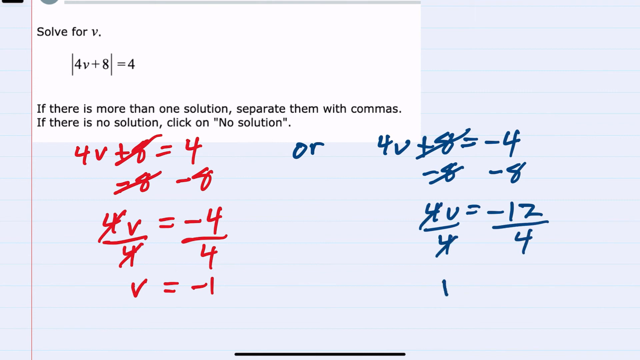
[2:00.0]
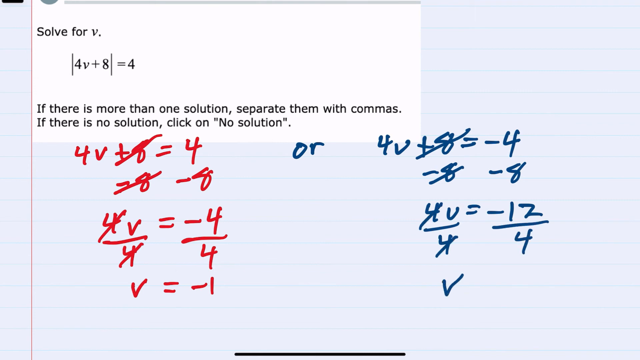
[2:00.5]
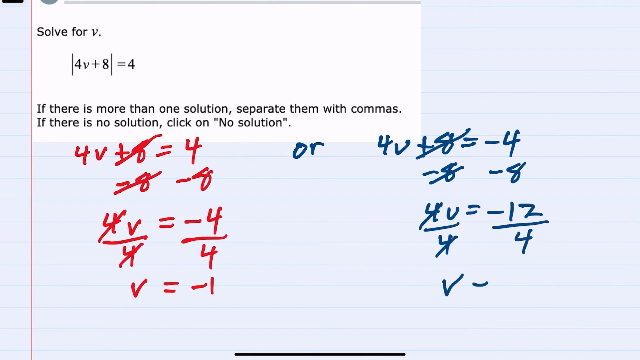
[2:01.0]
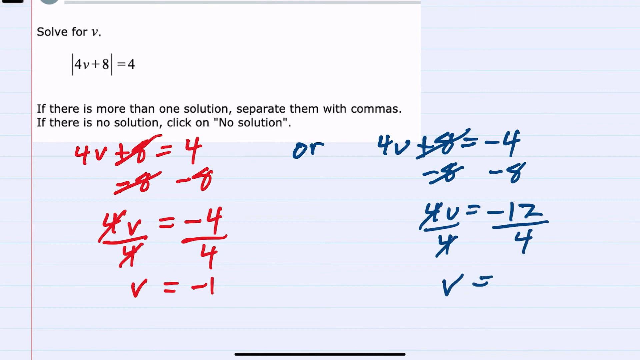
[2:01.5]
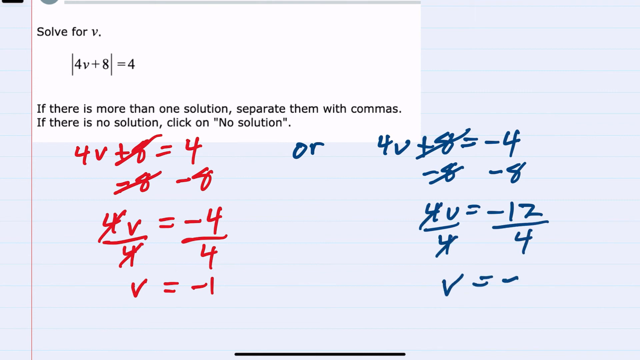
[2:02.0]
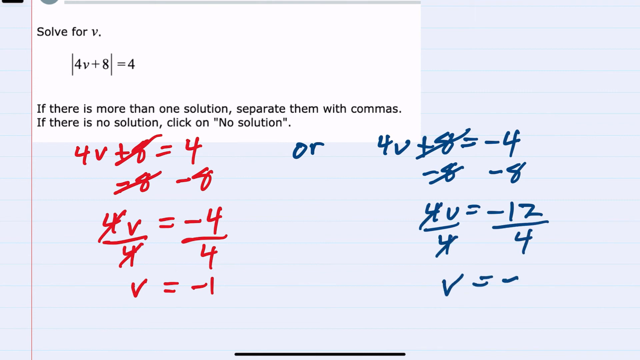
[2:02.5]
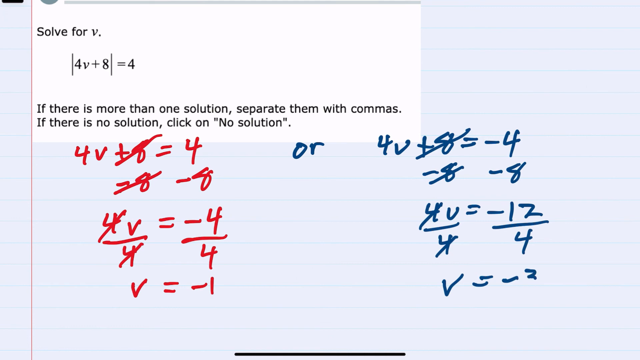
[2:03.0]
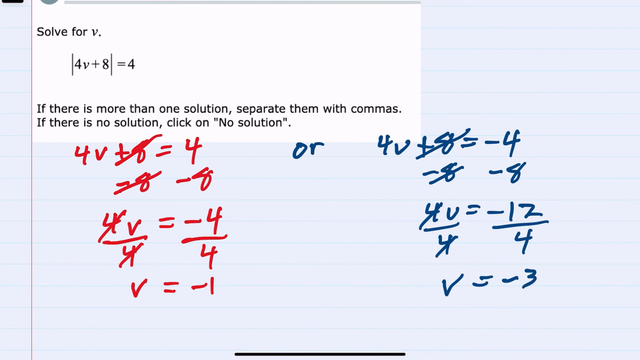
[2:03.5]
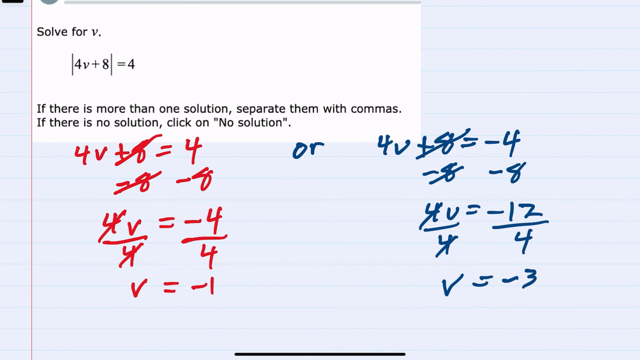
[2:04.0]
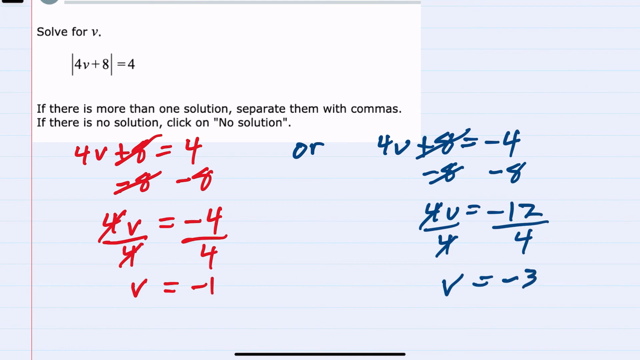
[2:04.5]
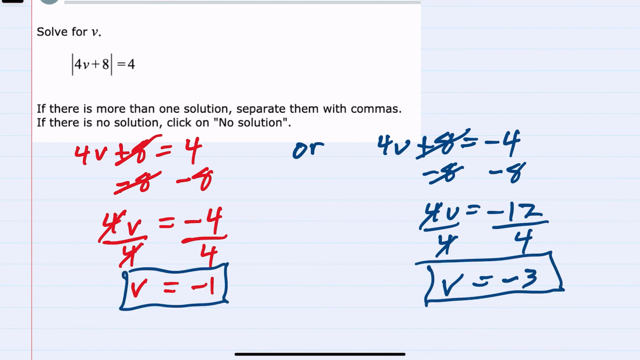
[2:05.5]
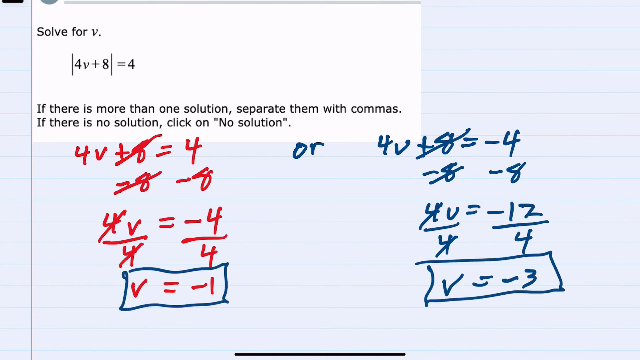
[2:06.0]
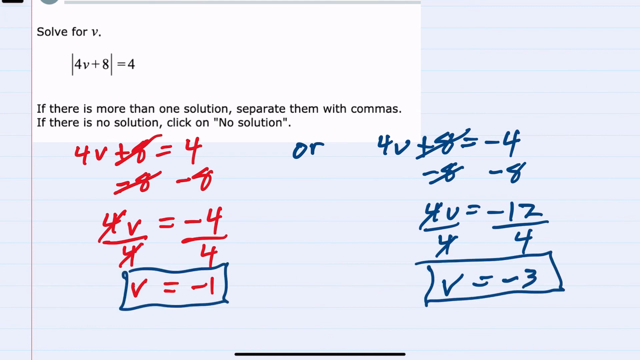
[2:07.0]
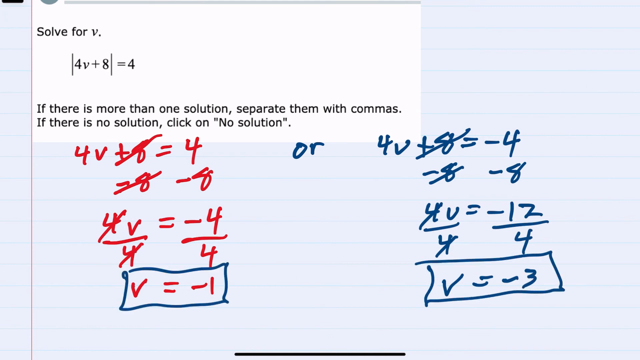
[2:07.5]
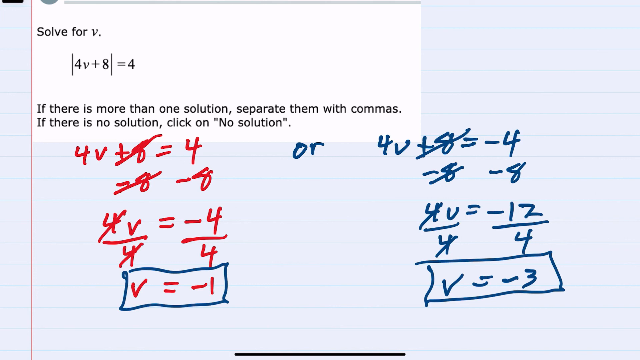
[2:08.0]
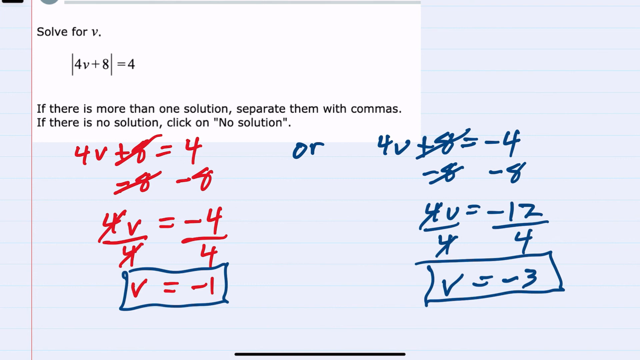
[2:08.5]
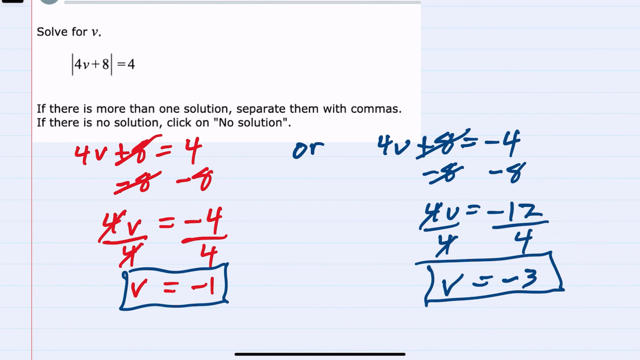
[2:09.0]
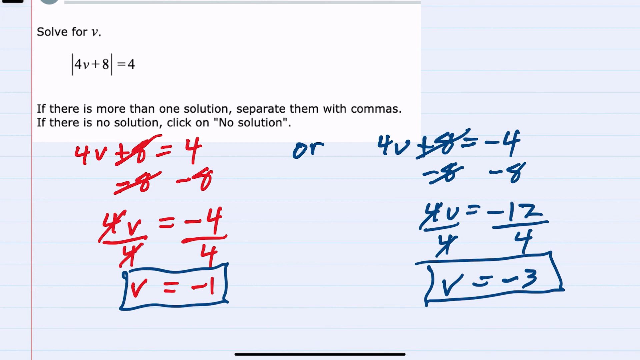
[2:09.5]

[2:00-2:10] The image looks like a piece of paper with an overlay reading "solve for v, 4v + 8 = 4" and the instructions "if there is more than one solution, separate them by commas. If there is no solution, click on no solution." Underneath, the author has already started solving the problem, on the left side with a red marker and on the right side with a blue marker. The left side has already shown the answer is wrong, and the blue side's answer also does not work. It is negative 1 on one side and negative 3 on the other.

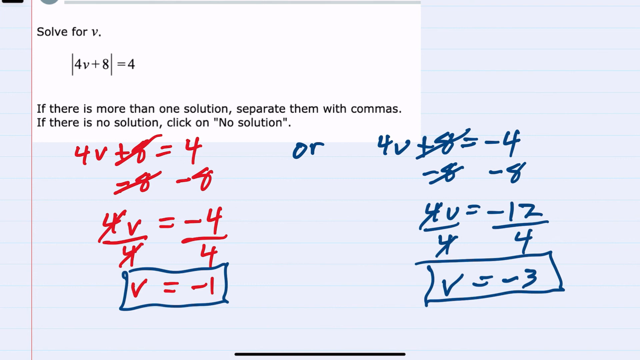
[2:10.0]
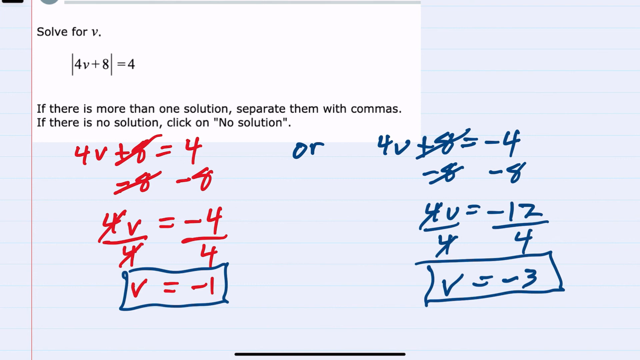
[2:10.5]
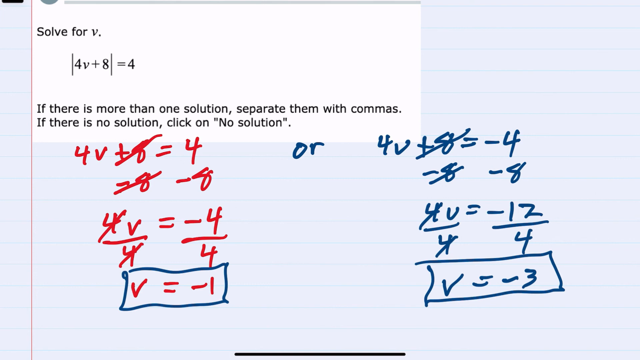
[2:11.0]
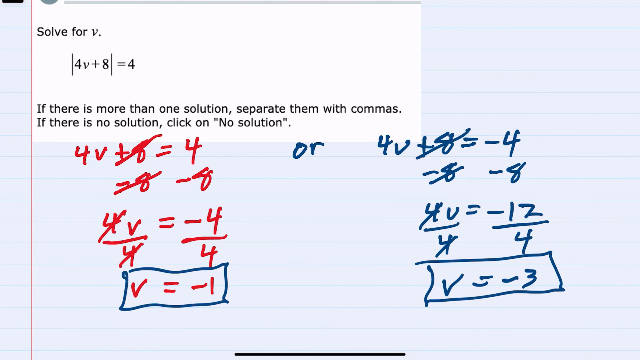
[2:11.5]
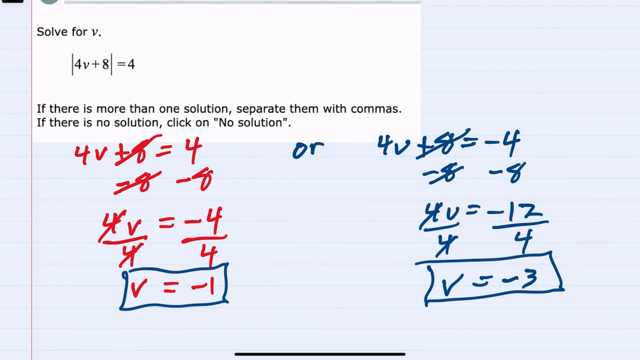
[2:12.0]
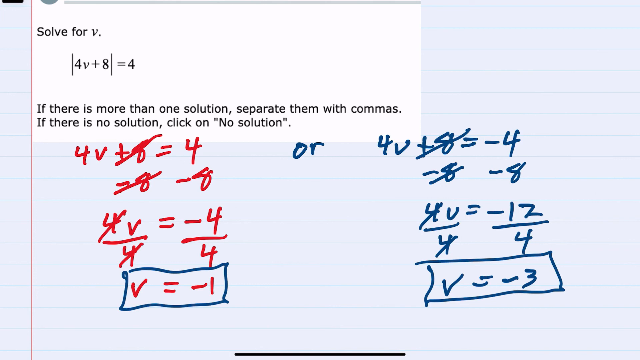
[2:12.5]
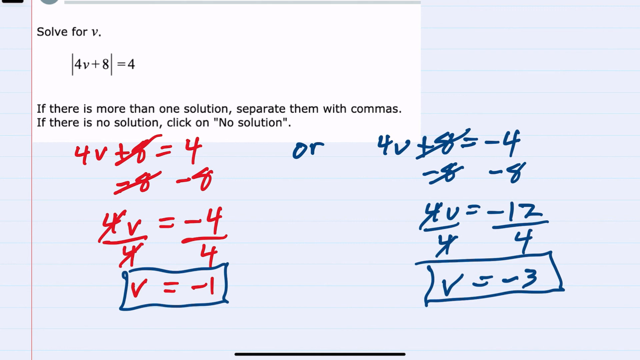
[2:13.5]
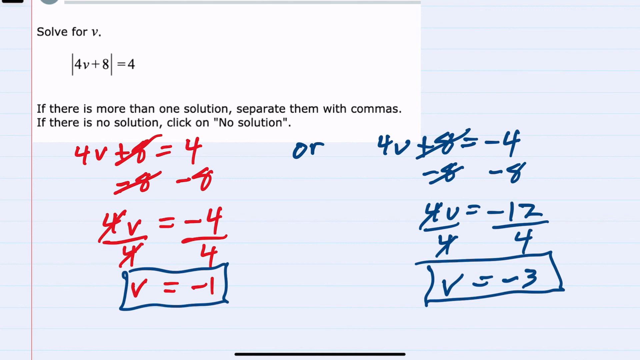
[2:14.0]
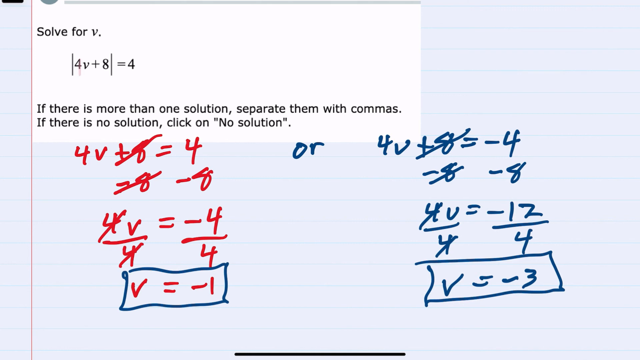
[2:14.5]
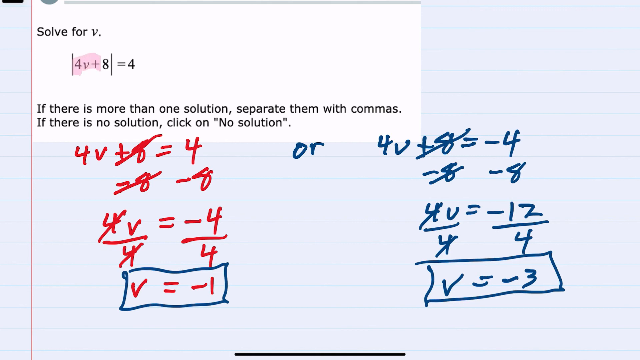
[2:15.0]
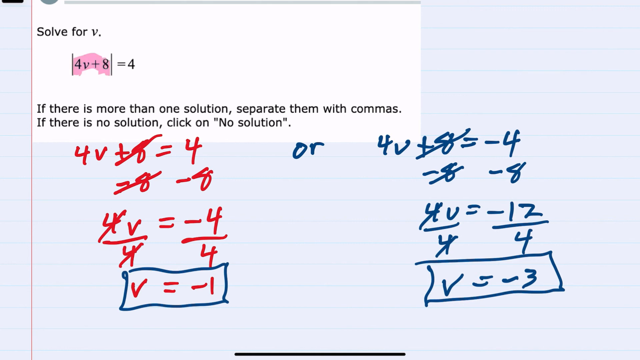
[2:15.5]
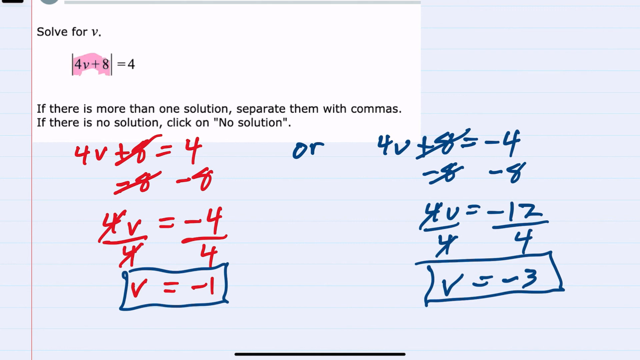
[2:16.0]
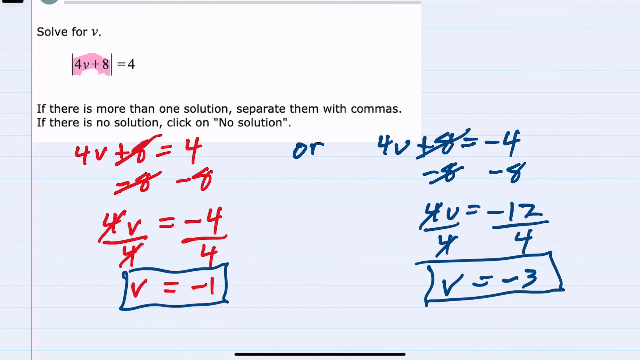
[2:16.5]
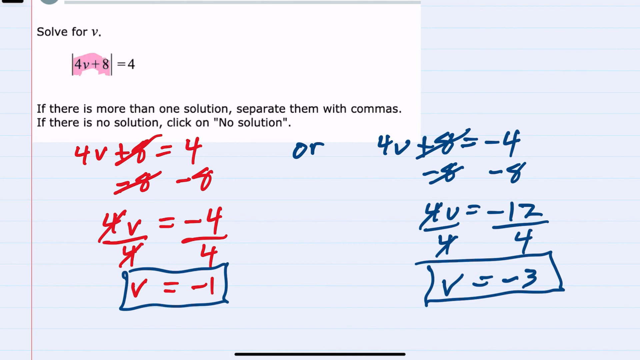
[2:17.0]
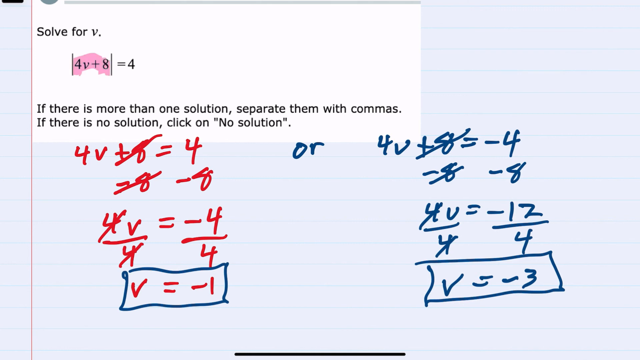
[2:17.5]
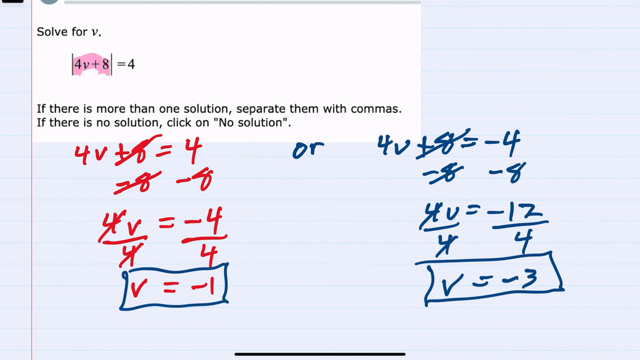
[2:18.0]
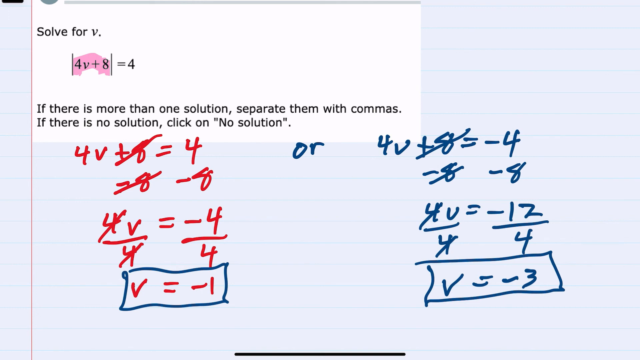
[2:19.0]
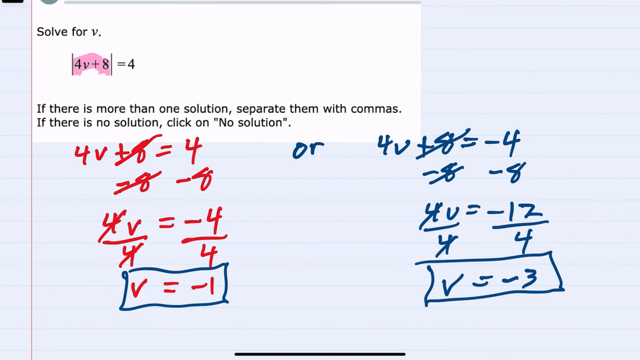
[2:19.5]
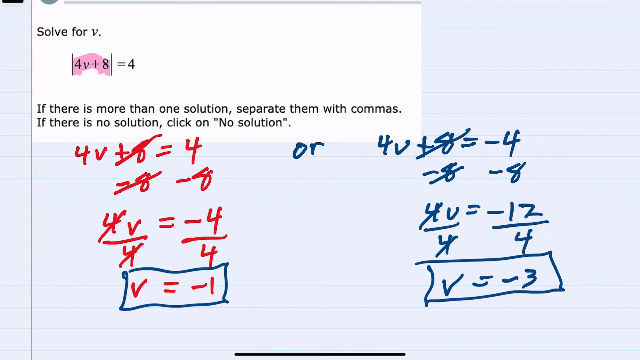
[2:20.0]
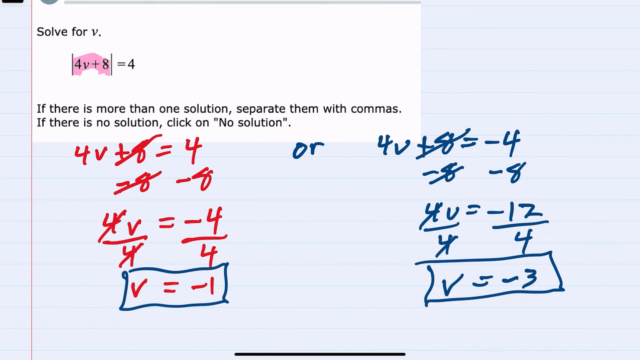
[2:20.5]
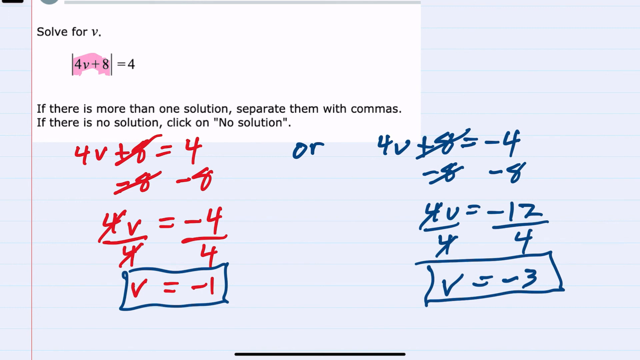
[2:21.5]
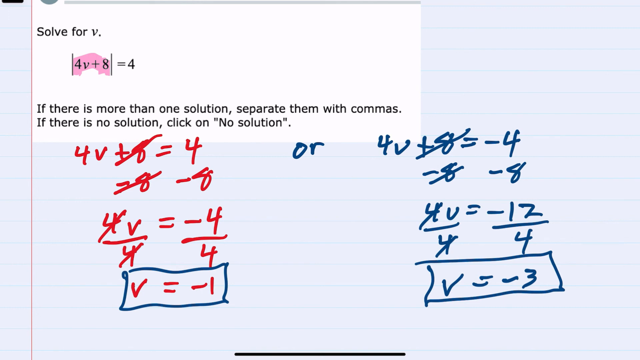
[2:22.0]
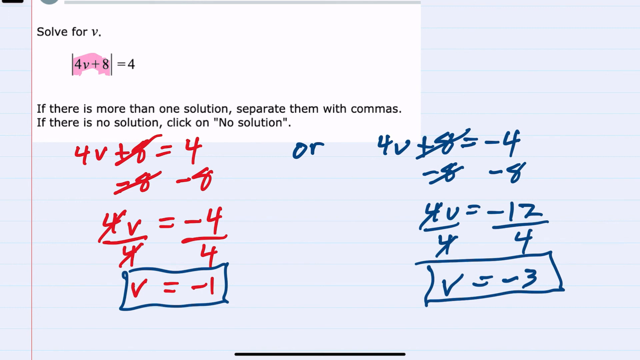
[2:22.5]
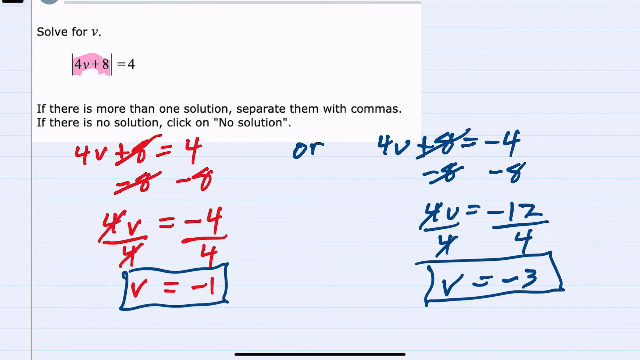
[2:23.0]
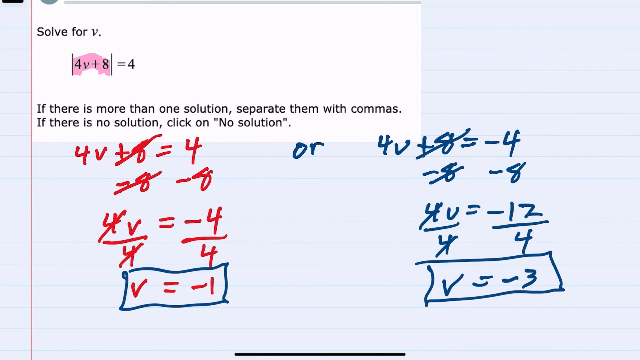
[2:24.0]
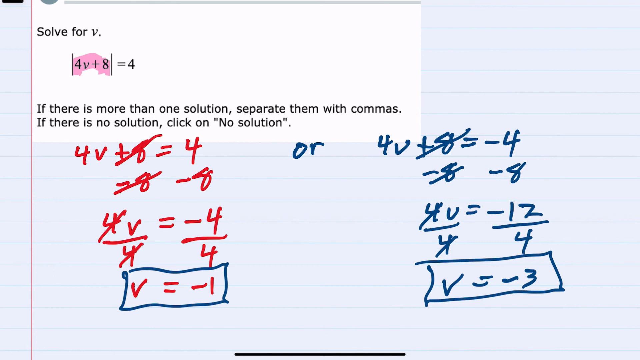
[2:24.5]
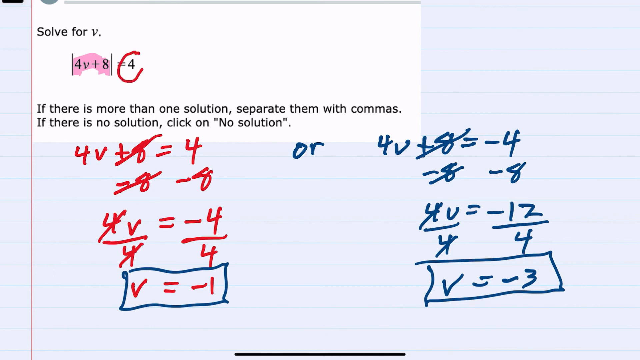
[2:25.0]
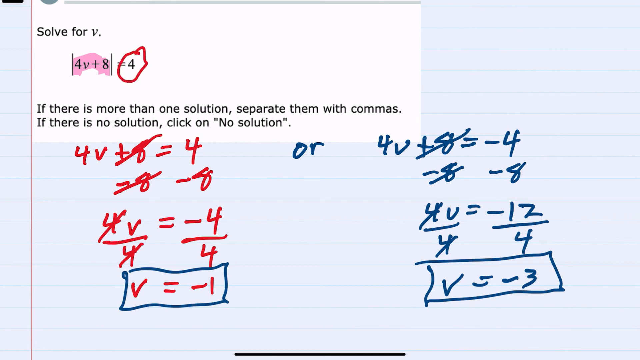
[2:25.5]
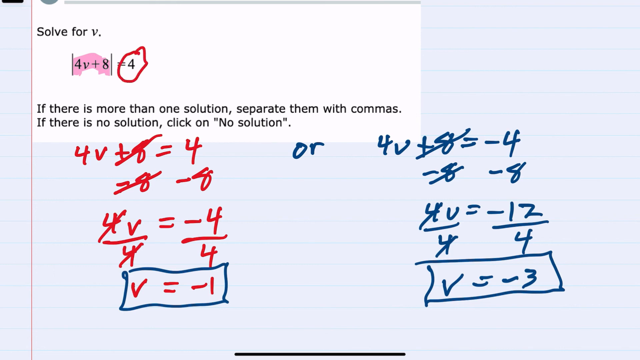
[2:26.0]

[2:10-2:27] The image looks like a piece of paper with an overlay; at the top it reads "solve for v, 4v + 8 = 4. If there is more than one solution, separate them with commas. If there is no solution, click on no solution." Underneath, the problem is solved in red on the left side and in blue on the right side, and in both cases the answer is incorrect and there is no solution. The author then marks the 4v + 8 in the original question, circles the 4 to show that there is a positive 4 in the question, and shows where it was solved for in the work.